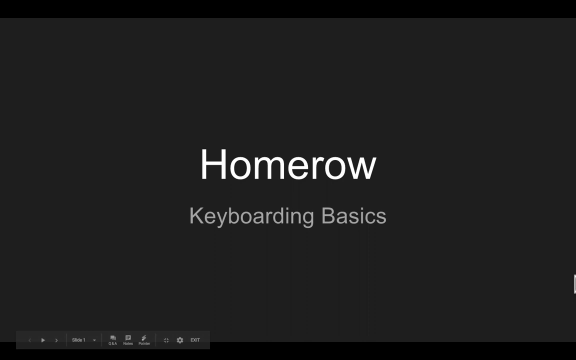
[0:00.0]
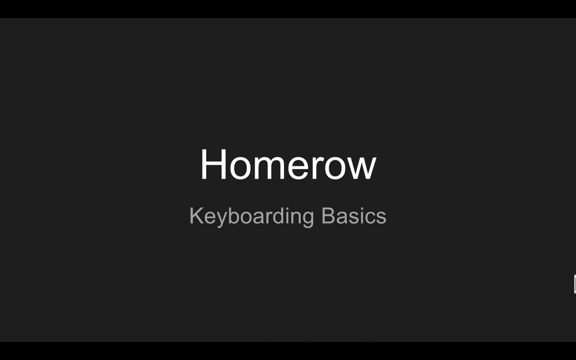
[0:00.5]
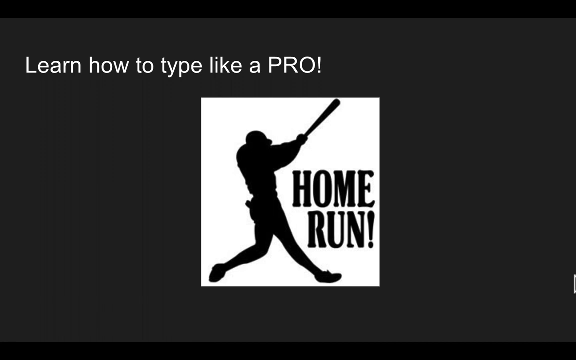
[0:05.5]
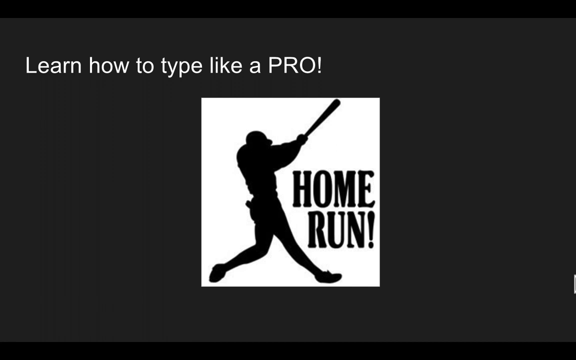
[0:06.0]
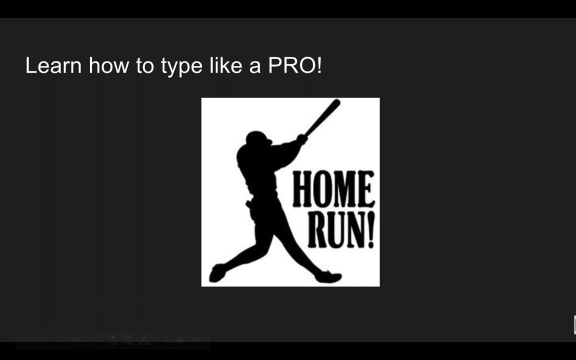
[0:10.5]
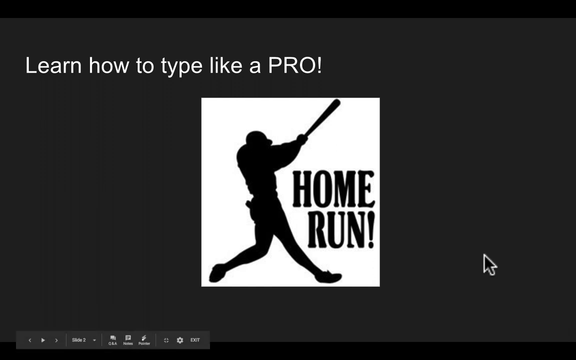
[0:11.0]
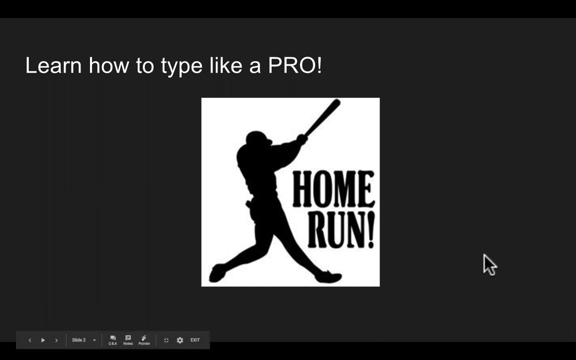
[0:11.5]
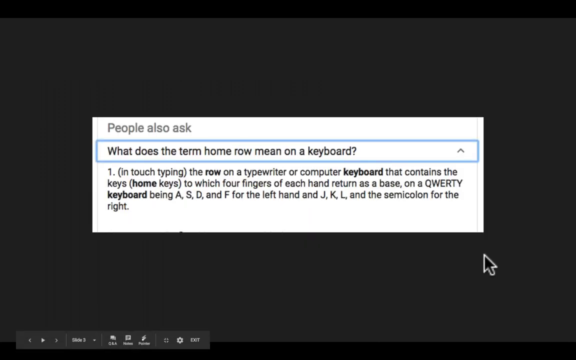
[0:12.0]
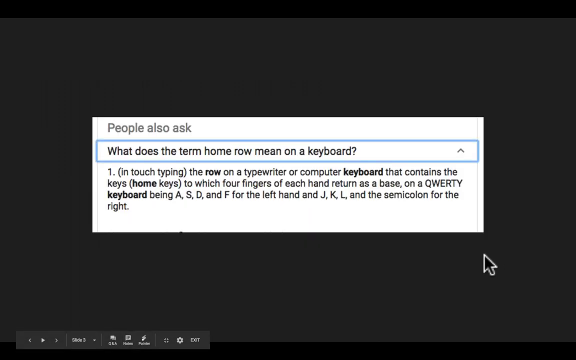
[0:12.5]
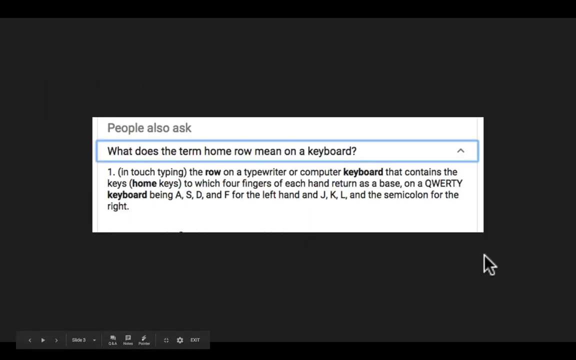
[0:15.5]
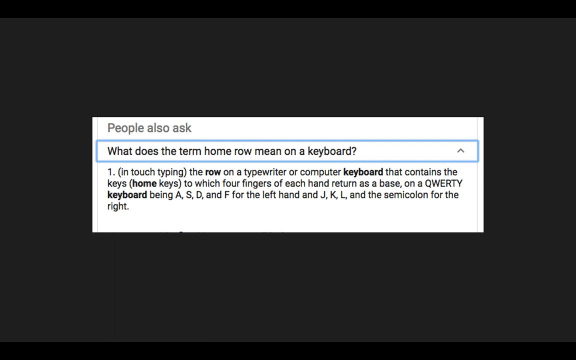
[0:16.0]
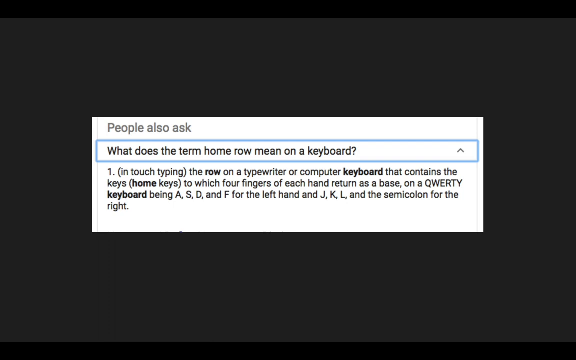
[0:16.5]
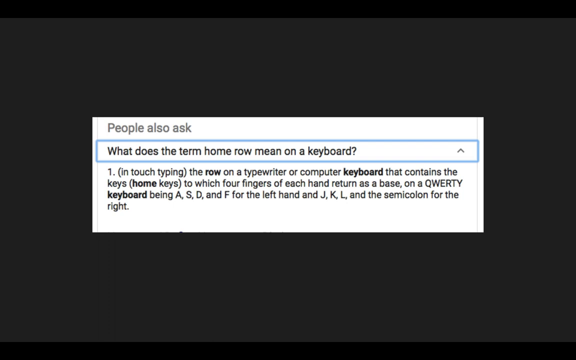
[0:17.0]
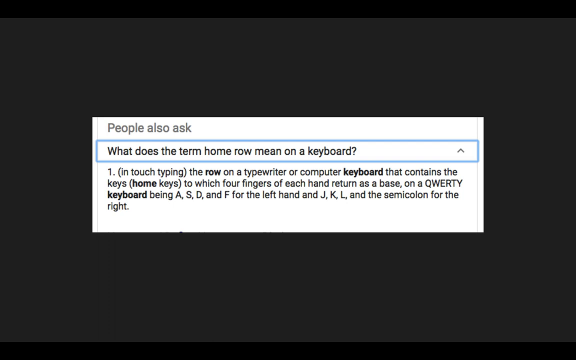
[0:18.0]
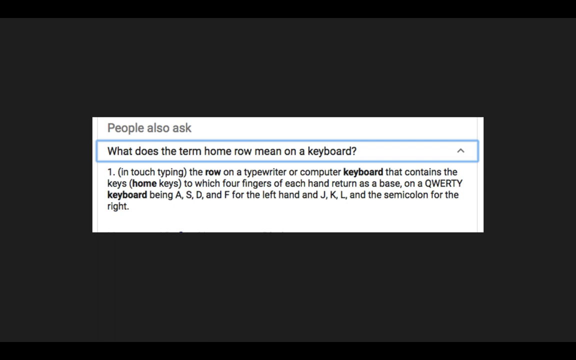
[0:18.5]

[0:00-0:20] The video has a black background with white writing and some image-like structures used for demonstration. It opens with a title about home row keyboard basics, and as the video proceeds, a definition of home row basics appears and is associated with certain keys on the keyboard. There is a poster of a man holding a hockey stick, with a word written on the poster. After this illustration, the video moves on to where the definition of home row basics is given.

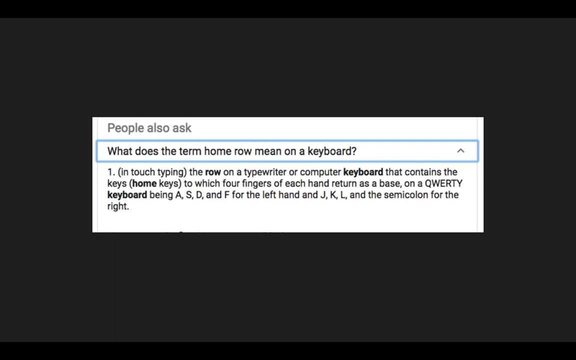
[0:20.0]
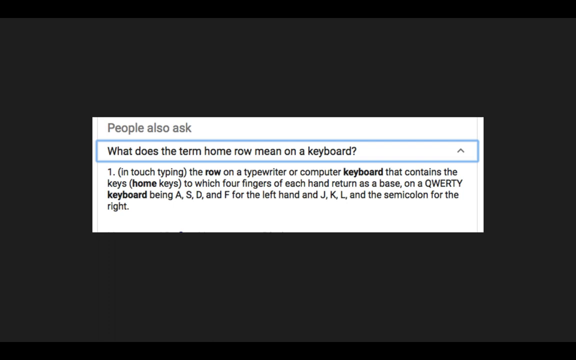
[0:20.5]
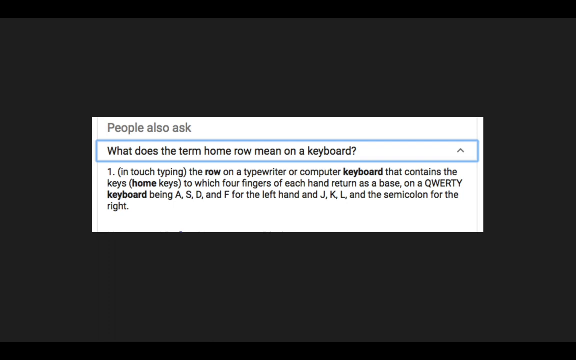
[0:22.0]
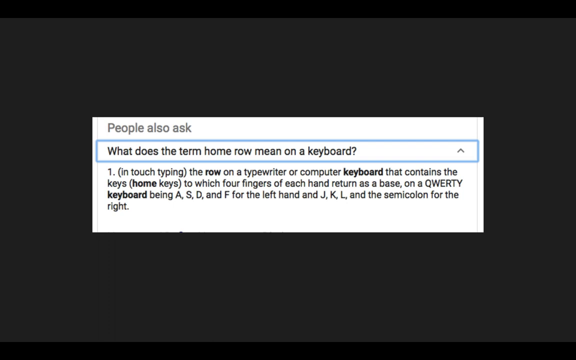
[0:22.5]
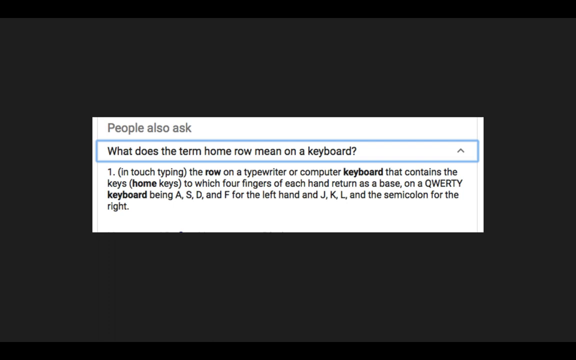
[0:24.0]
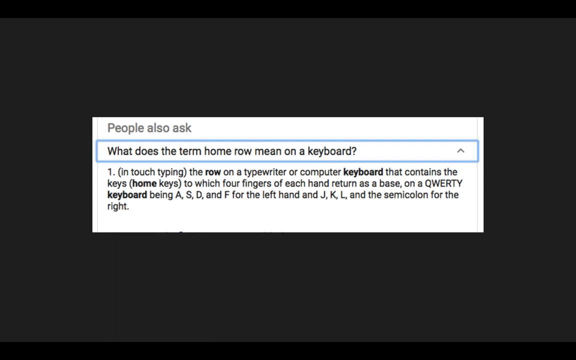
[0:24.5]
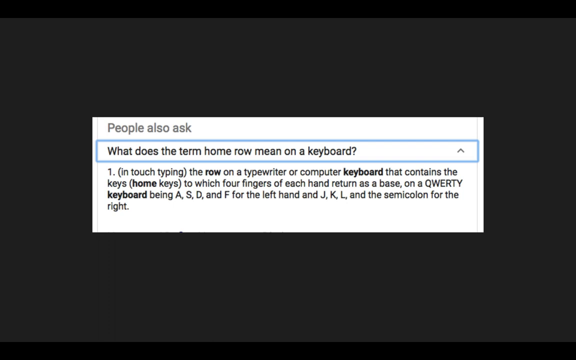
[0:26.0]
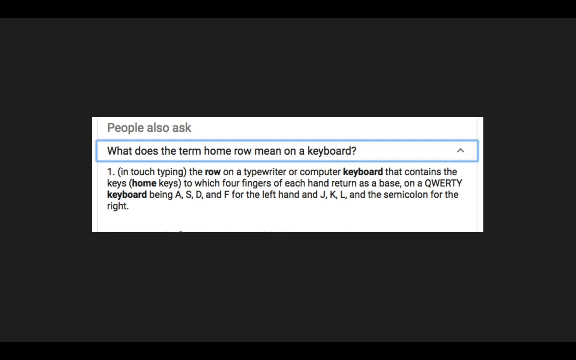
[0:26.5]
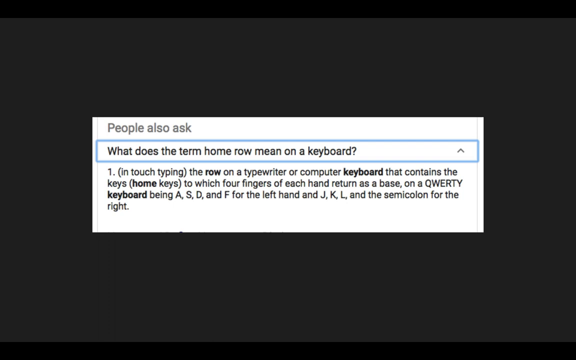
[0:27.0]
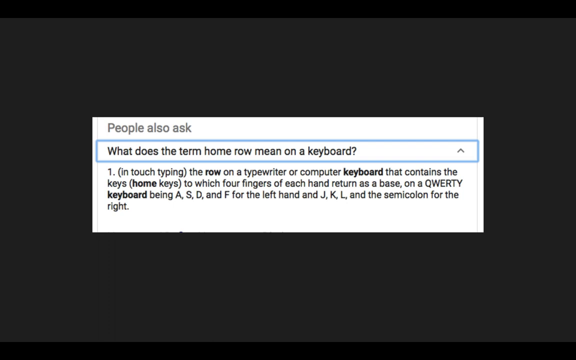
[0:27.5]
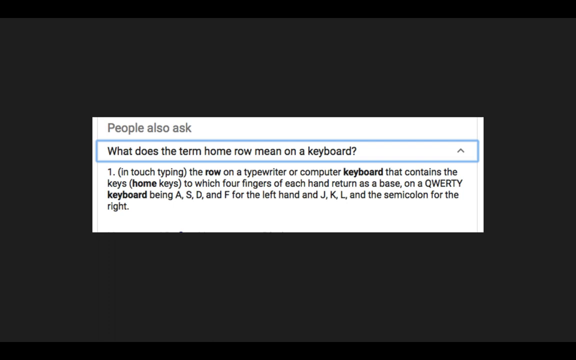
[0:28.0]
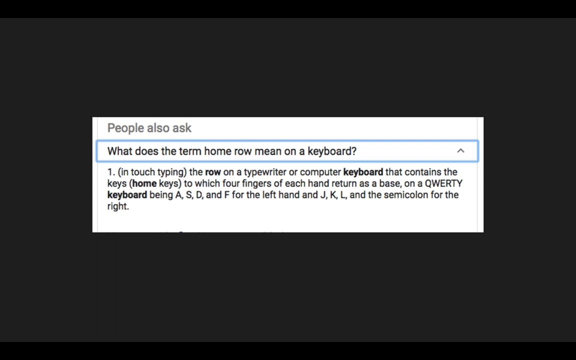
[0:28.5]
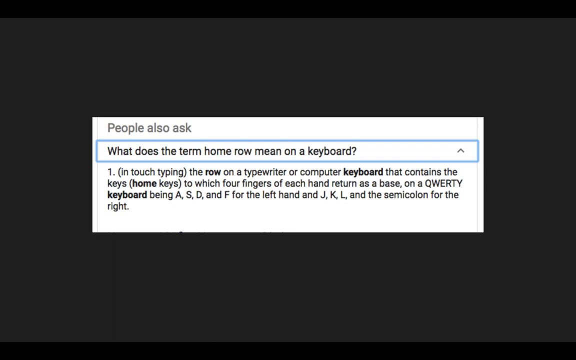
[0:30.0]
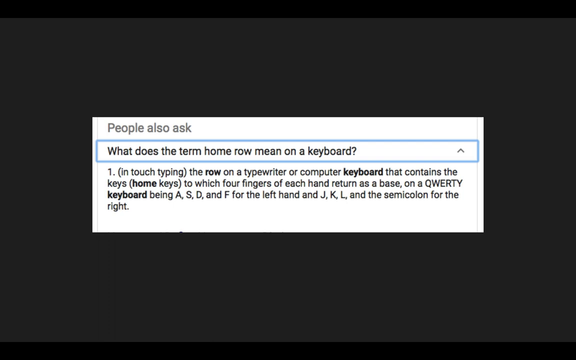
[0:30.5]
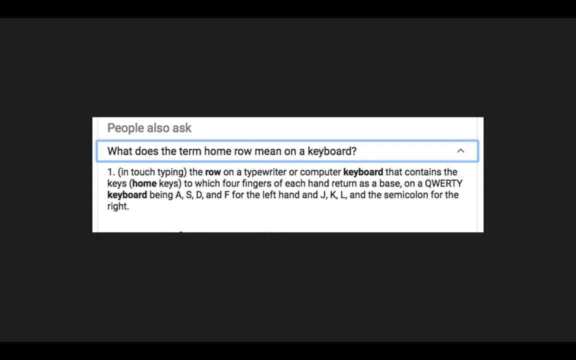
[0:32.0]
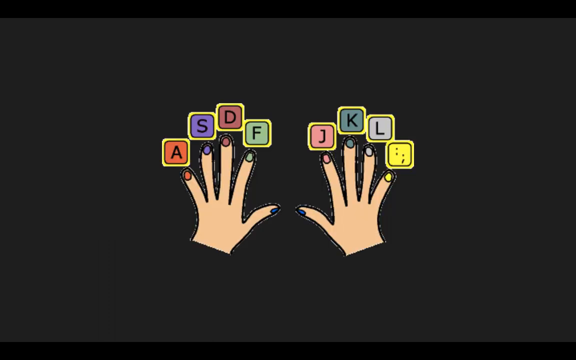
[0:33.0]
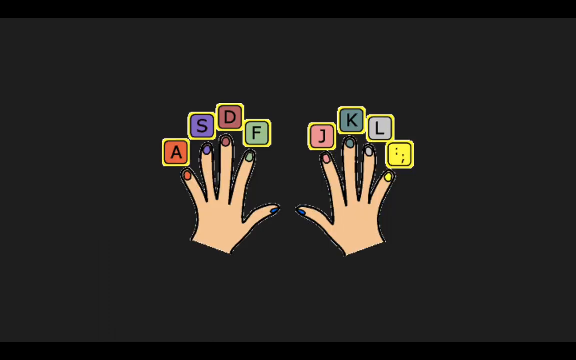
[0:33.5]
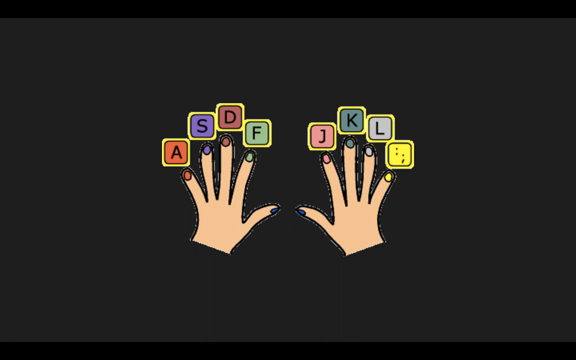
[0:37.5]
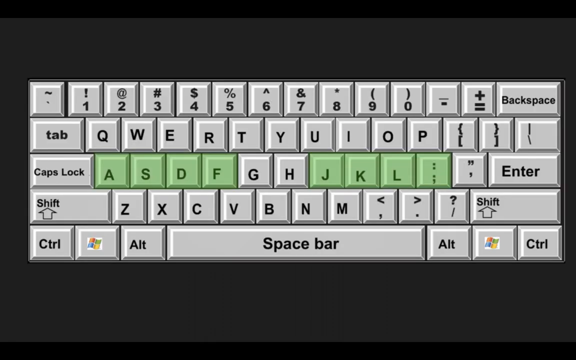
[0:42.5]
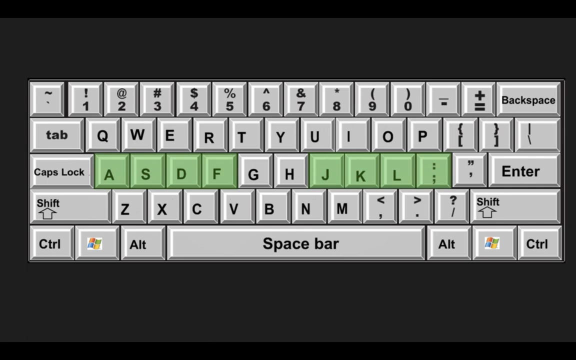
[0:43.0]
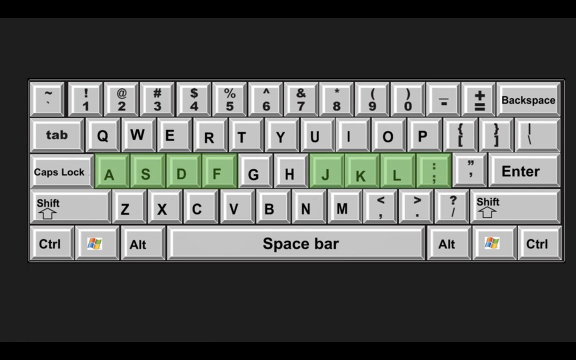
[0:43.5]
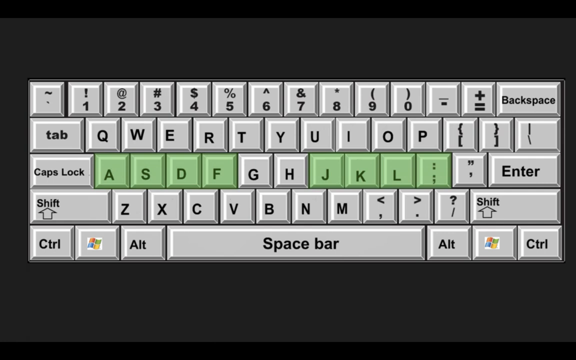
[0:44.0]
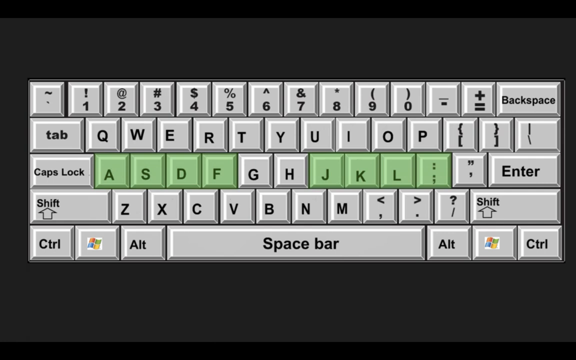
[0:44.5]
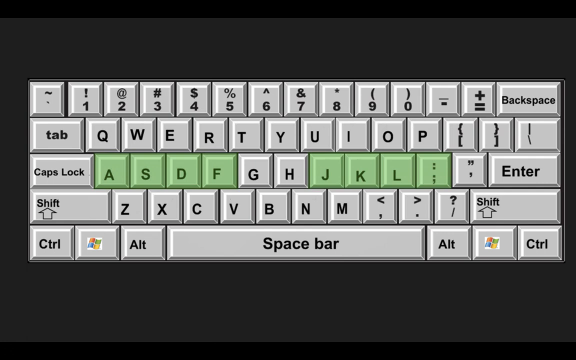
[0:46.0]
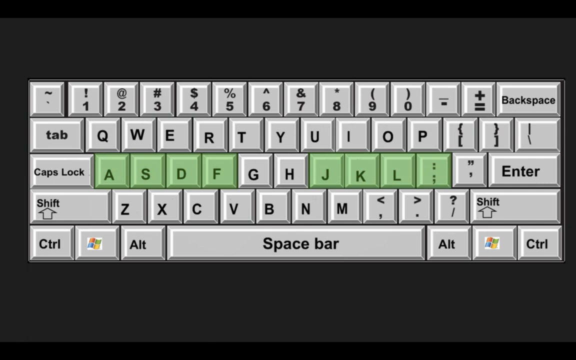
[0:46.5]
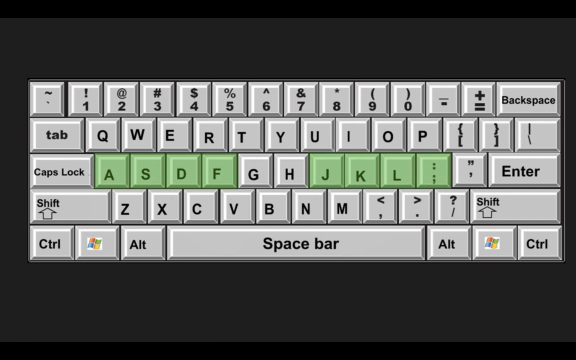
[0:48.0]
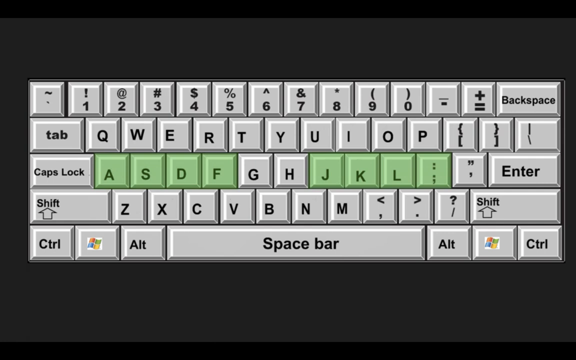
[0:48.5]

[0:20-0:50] Human fingers are placed on specific letters of a keyboard. One hand's fingers are on the A, S, D and F keys, while on the right side the fingers are on the J, K and L keys and one more key that is not specified. After the fingers, a special keyboard is displayed on which the letters A, S, D, F and J, K, L are marked in a different color from the other keys.